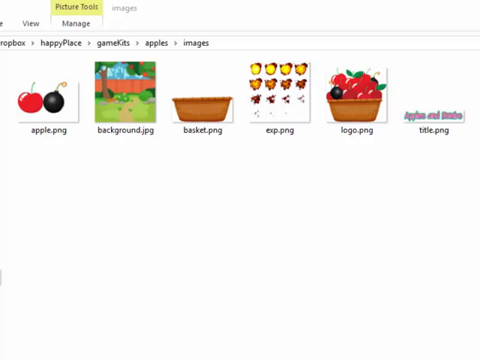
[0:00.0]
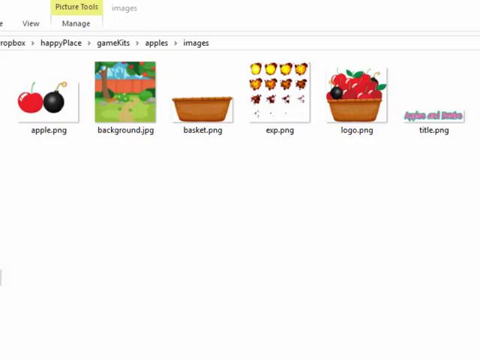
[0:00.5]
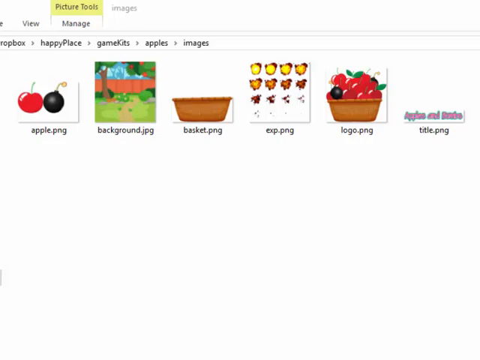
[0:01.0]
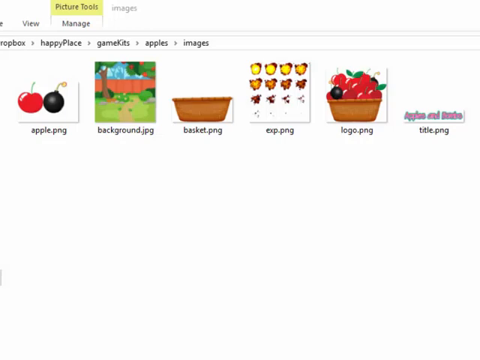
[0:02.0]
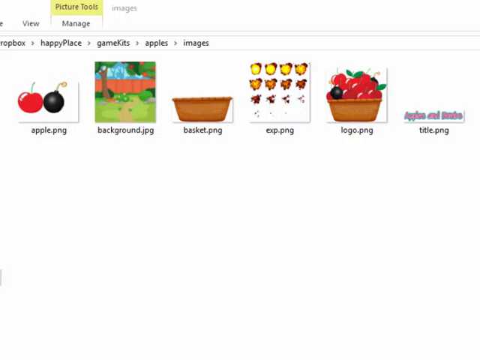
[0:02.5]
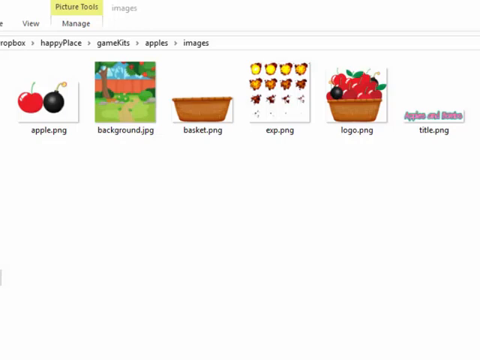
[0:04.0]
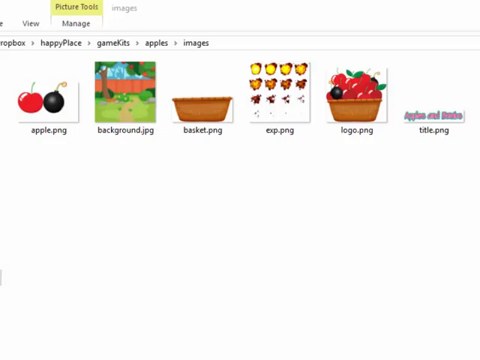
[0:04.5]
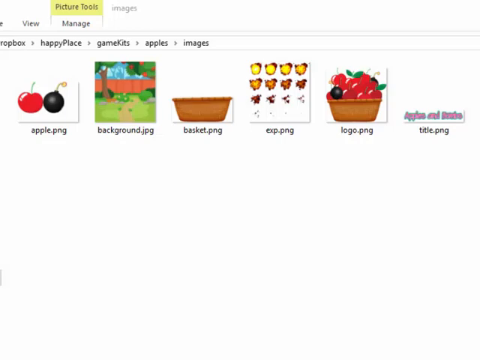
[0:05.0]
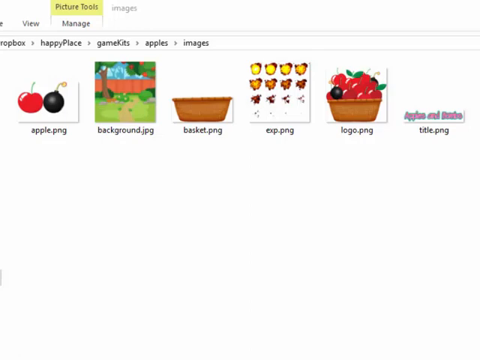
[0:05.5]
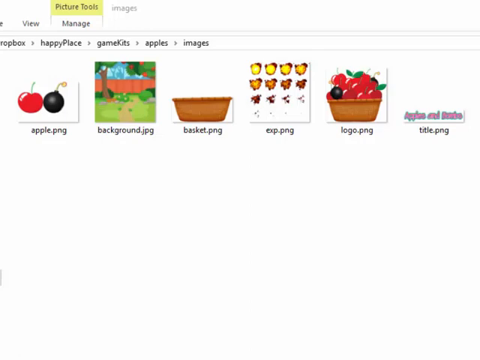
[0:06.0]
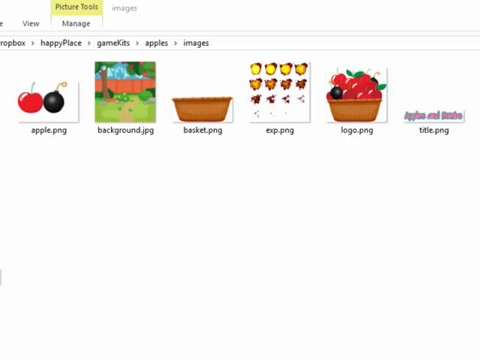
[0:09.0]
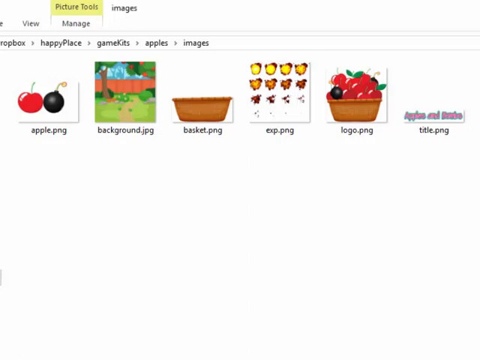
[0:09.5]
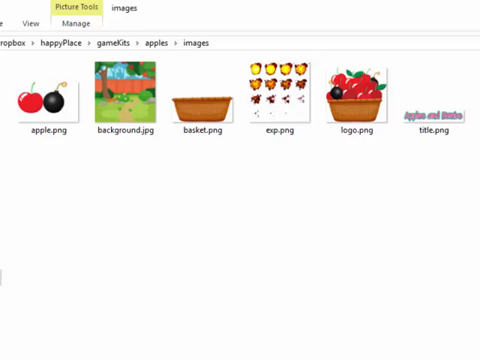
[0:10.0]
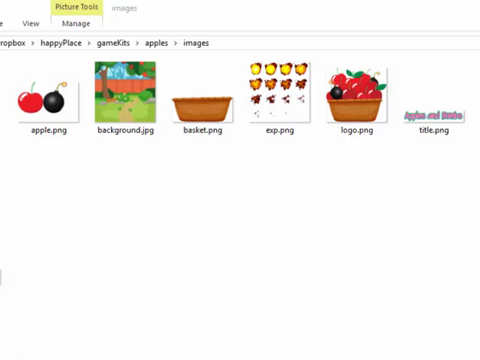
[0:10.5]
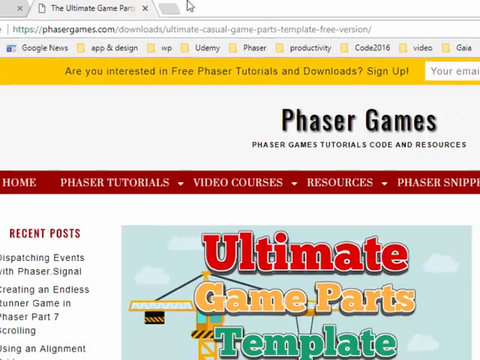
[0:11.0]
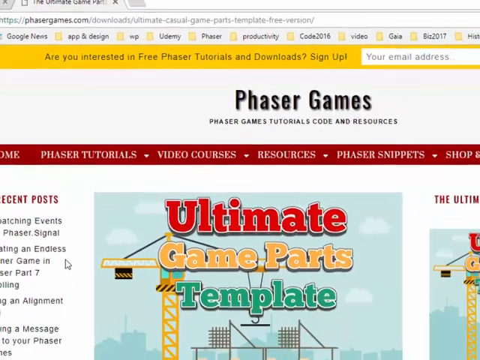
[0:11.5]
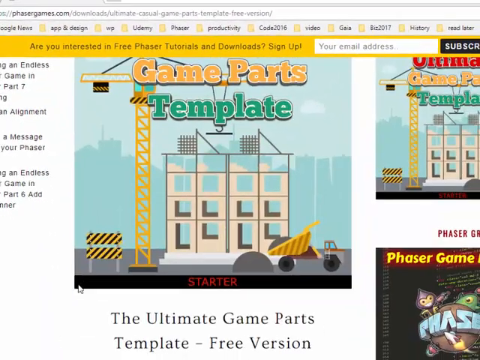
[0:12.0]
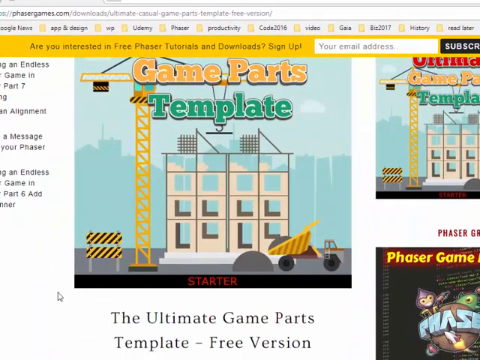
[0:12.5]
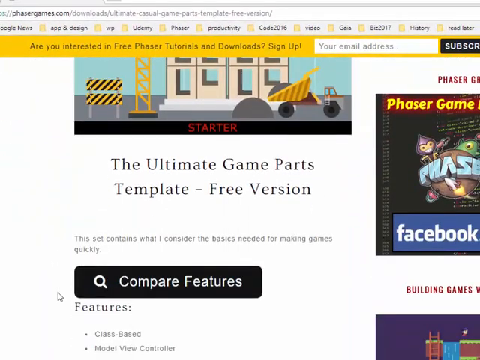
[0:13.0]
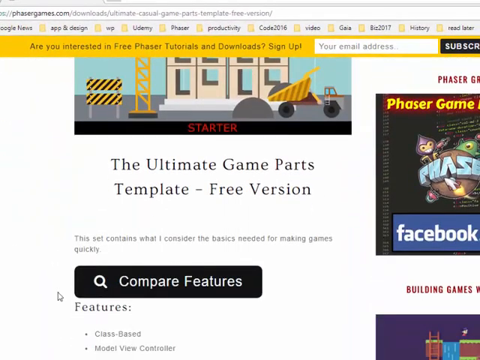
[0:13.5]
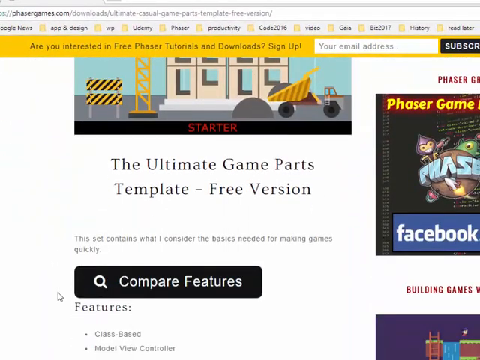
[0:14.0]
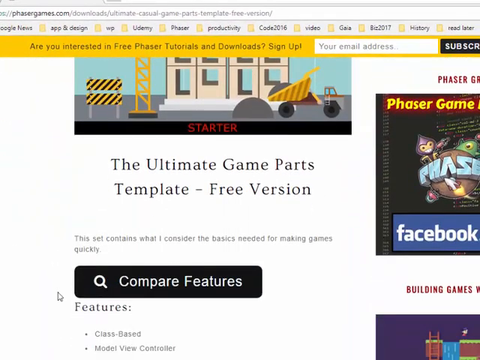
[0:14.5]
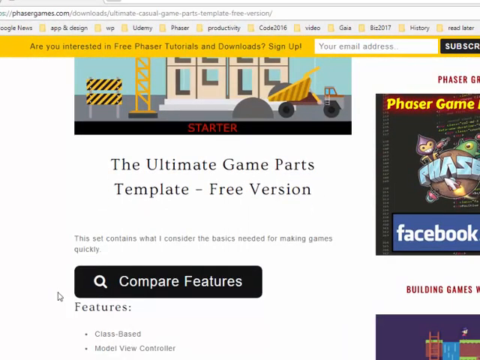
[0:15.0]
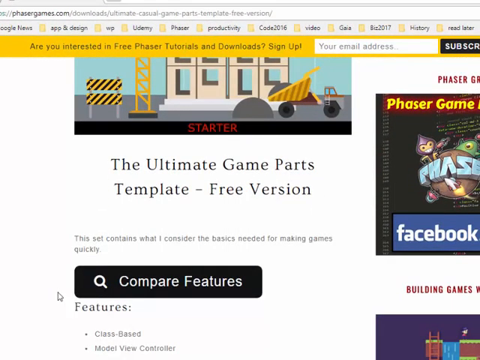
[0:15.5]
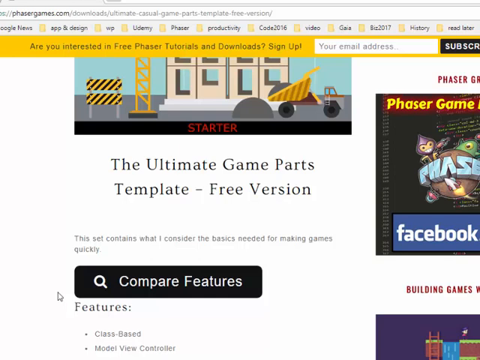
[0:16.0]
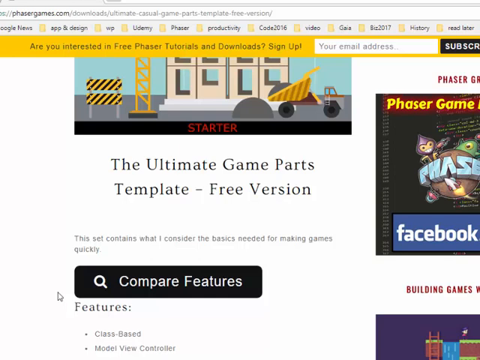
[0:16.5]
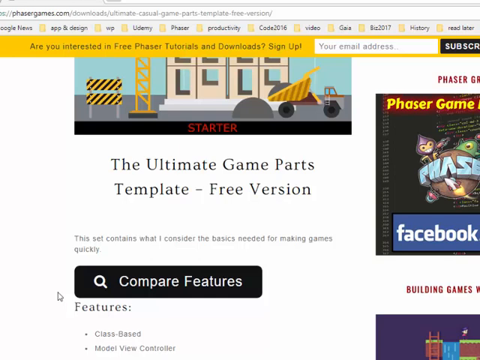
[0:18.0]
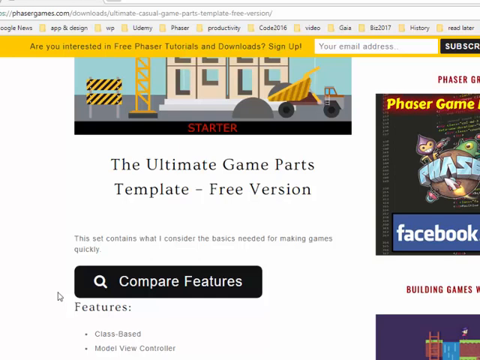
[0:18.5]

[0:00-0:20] A folder on a computer is open, showing "view" and "manage" and a yellow banner reading "picture tools" with "images" beside it. Below that, a path reads "Dropbox", arrow, "Happy Place", arrow, "Game Kits", arrow, "Apples", arrow, "images", all in black. The screen background is solid white. Six thumbnails are shown. The first is an apple next to a bomb, though it could be a cherry; it is red with a shiny little line on the left side, and the black bomb is lit at the end of its wire. It is named apple.png. The next is an animated backyard scene with trees, a little walkway, green grass, bushes and a wooden fence. Then comes a brown basket named basket.png. The next is a picture of several different things too small to make out, four tiny items on each line, named exp.png. The next is a basket full of bright, shiny red apples with green leaves and stems, with two bombs stuck in among them; it is called logo.png. The last is a title banner that apparently says "apples and bombs", named title.png.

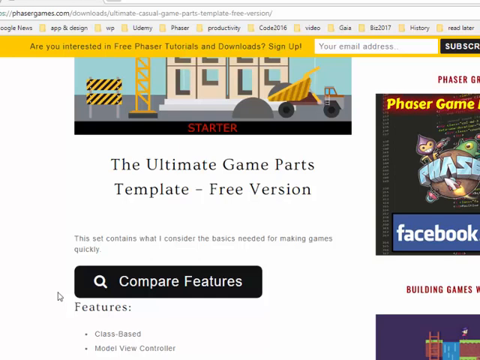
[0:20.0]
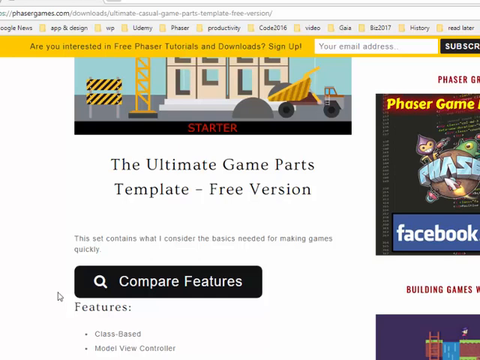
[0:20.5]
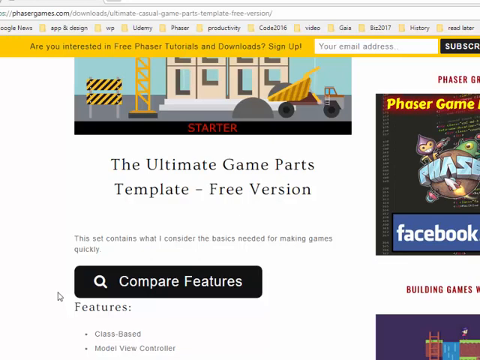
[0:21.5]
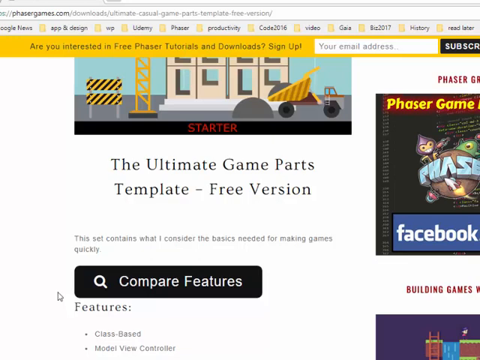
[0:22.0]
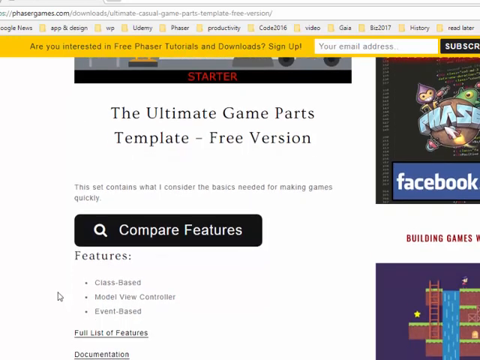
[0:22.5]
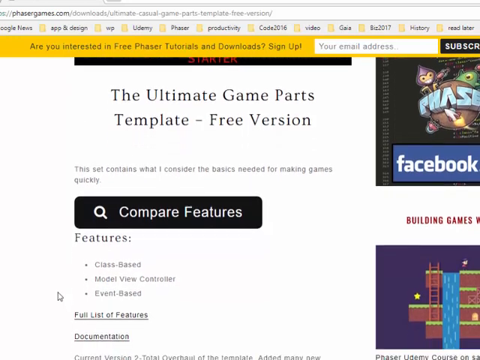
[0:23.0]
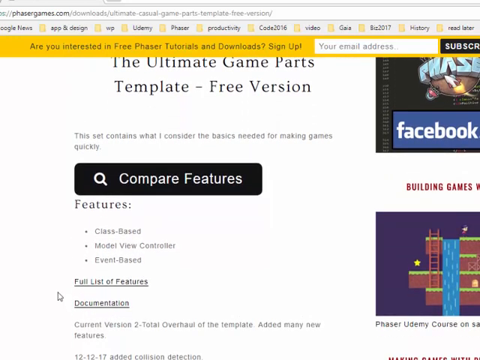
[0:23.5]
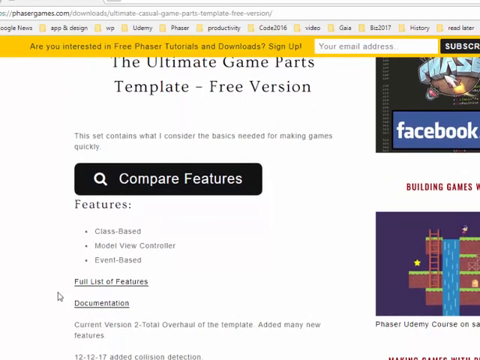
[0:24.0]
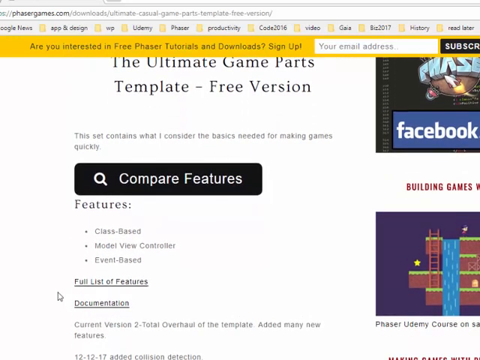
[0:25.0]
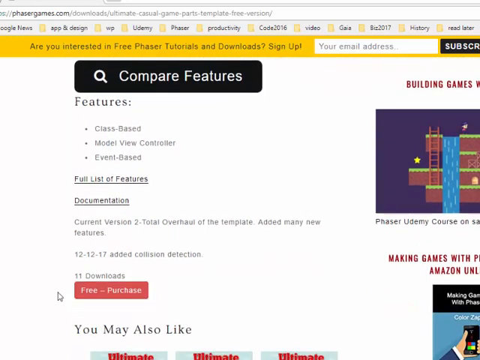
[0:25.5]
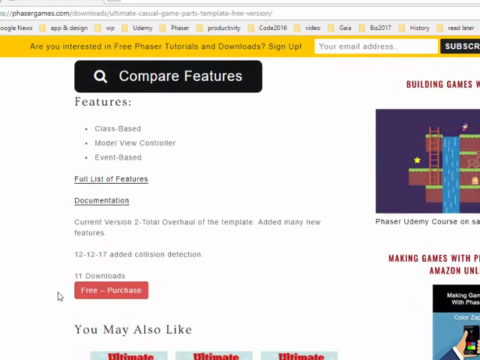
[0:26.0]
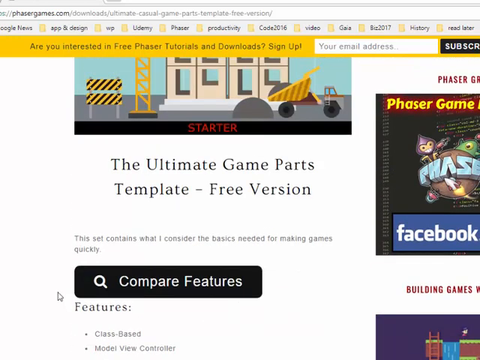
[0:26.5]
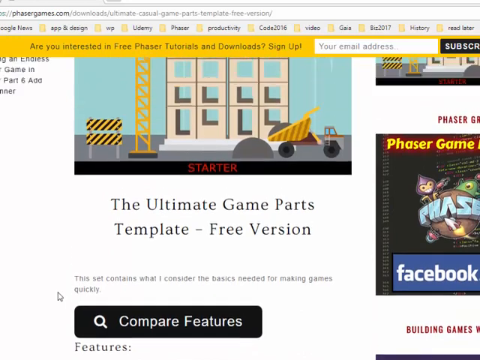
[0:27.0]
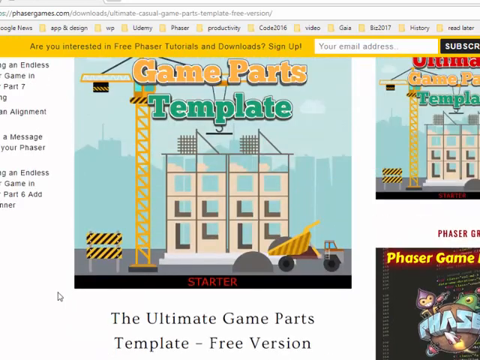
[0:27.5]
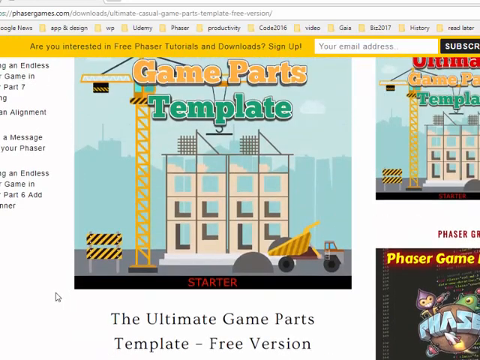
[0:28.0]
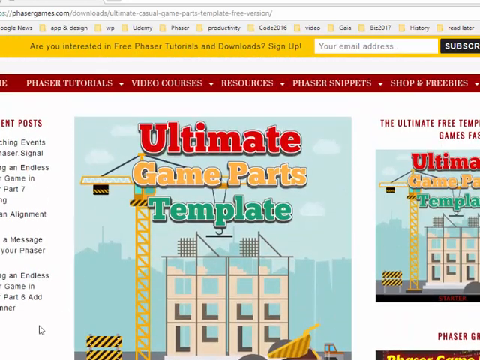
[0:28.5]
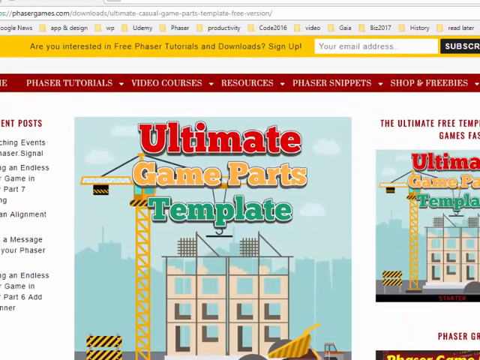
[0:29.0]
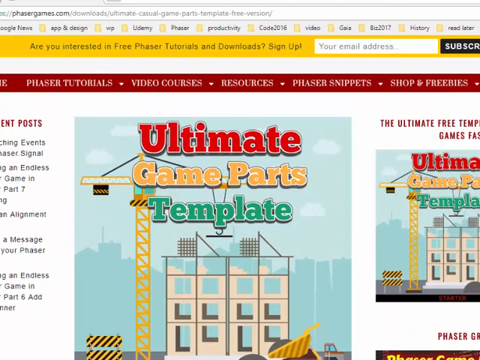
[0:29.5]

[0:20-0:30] A website, phasergames.com, is open, with several clickable bookmarks under the browser bar. Below them, a banner on the site reads "are you interested in free phaser tutorials and downloads? Sign up." There is a white box for entering an email address with a black subscribe button beside it. A large picture shows a construction area with a building, with text reading "starter" and "the ultimate game parts template free version". There is a compare features button, and text reads "this set contains what I consider the basics needed for making games quickly." Various phaser game buttons, Facebook links and building games links are on the left. The page scrolls down to show lists of features, then scrolls back up to a red bar with more information. The text is in white and the background is solid white. There are download buttons, and a menu on the left is slightly cut off.